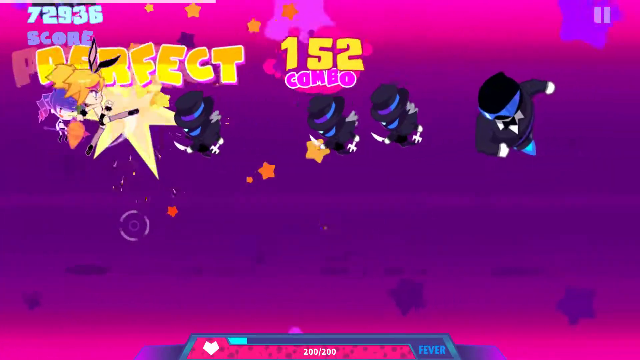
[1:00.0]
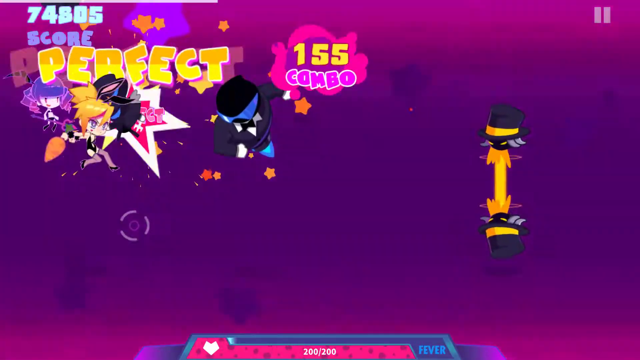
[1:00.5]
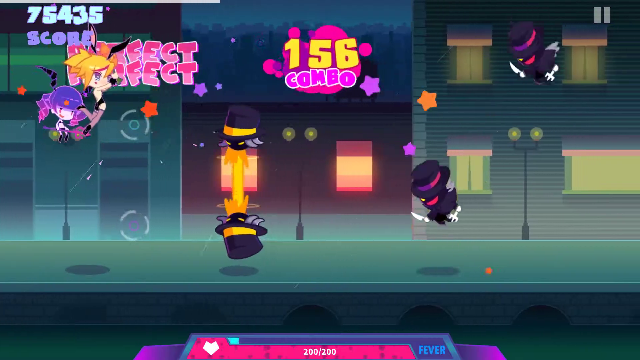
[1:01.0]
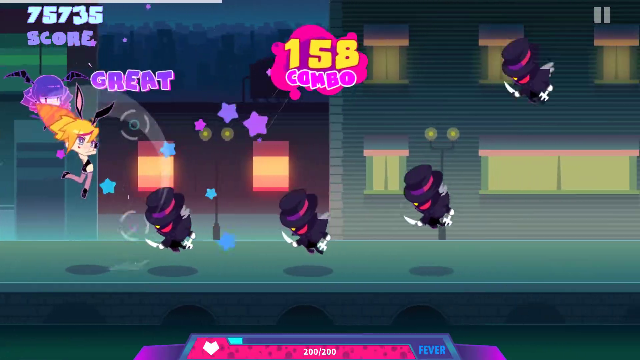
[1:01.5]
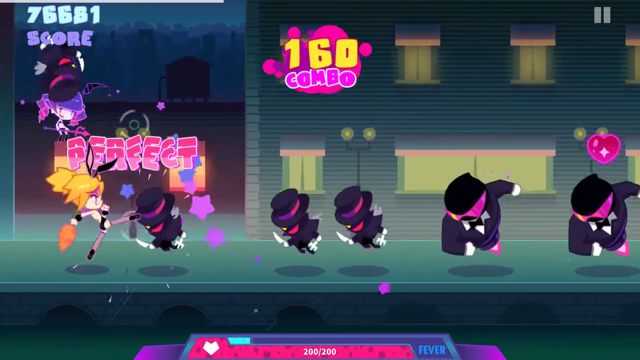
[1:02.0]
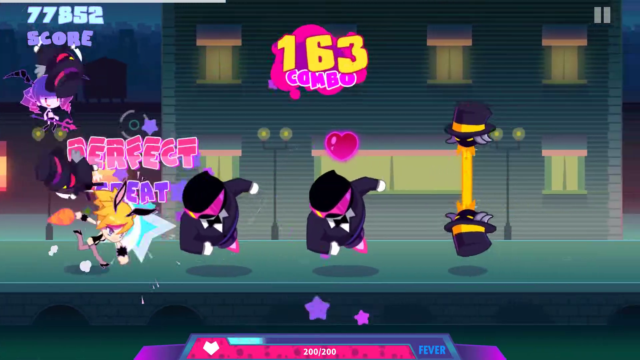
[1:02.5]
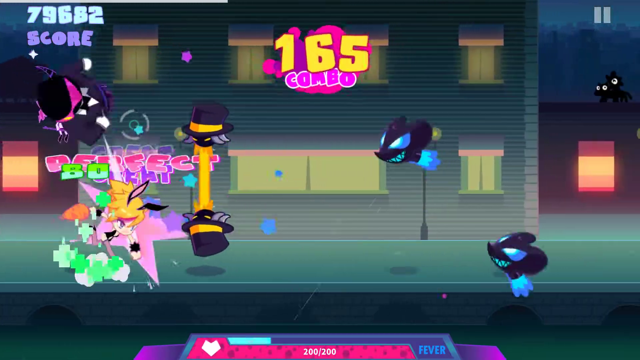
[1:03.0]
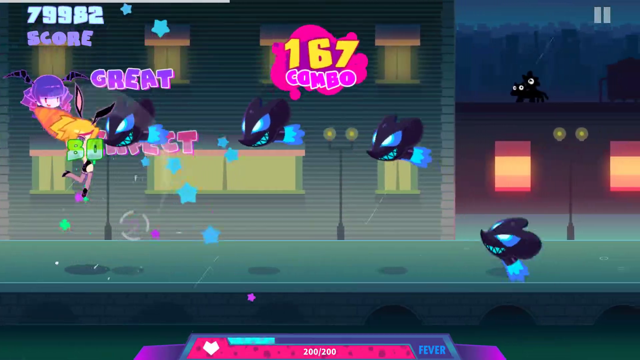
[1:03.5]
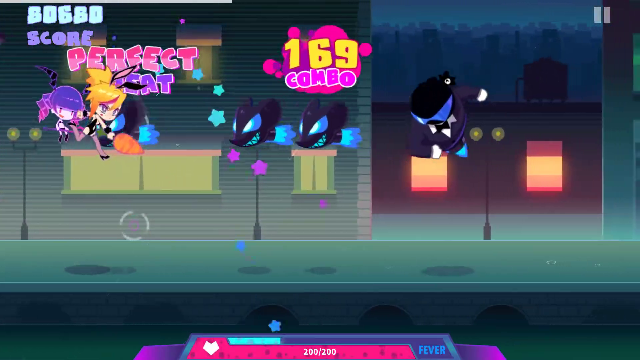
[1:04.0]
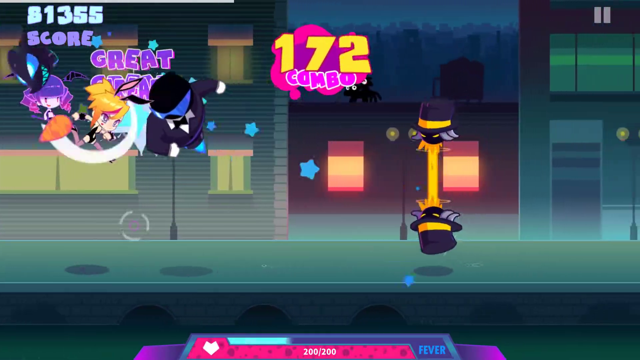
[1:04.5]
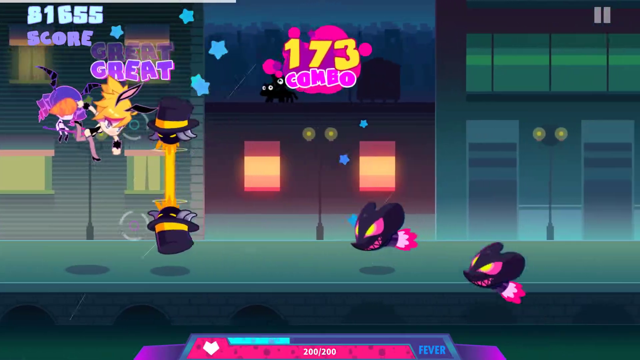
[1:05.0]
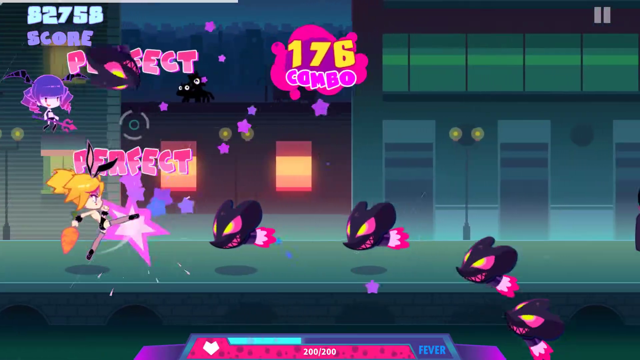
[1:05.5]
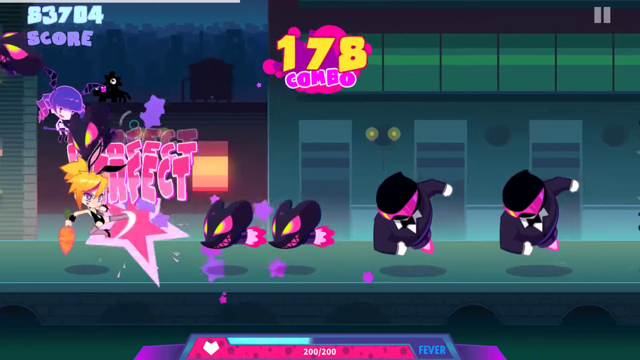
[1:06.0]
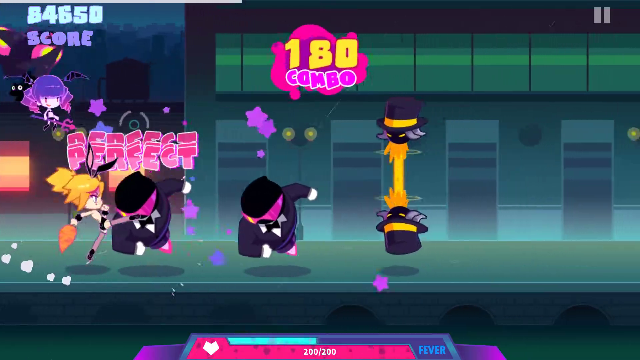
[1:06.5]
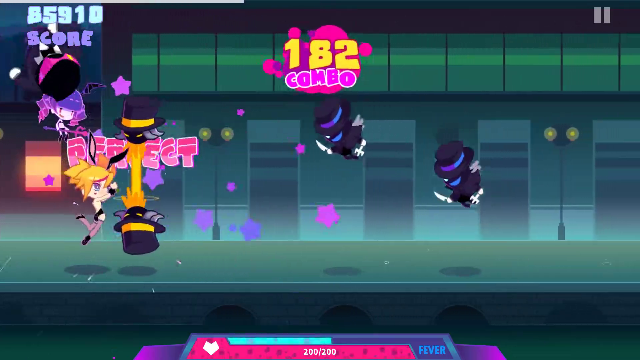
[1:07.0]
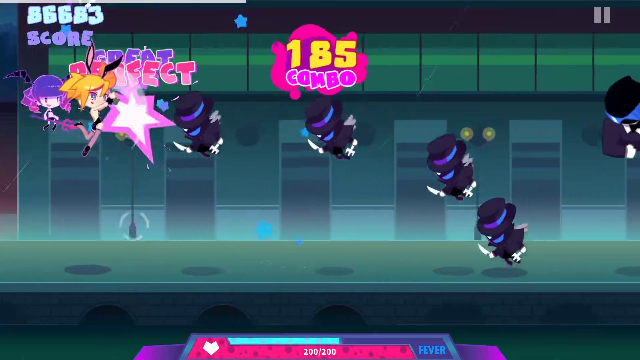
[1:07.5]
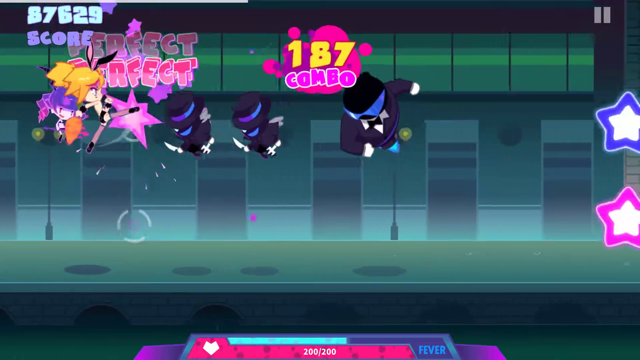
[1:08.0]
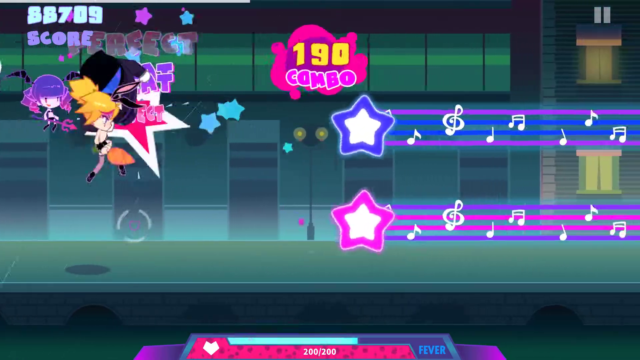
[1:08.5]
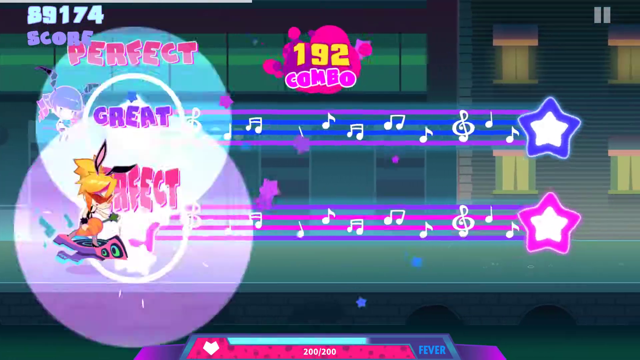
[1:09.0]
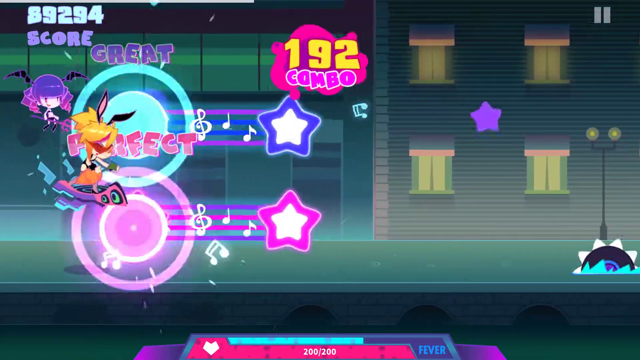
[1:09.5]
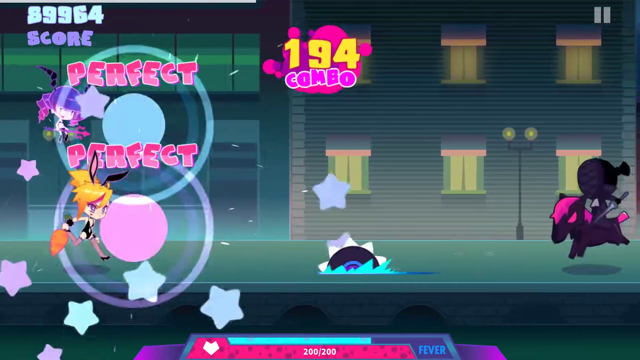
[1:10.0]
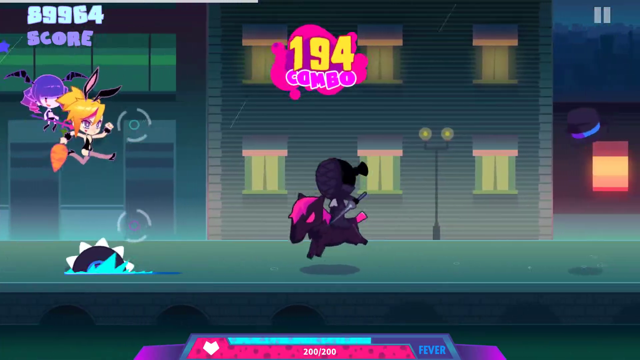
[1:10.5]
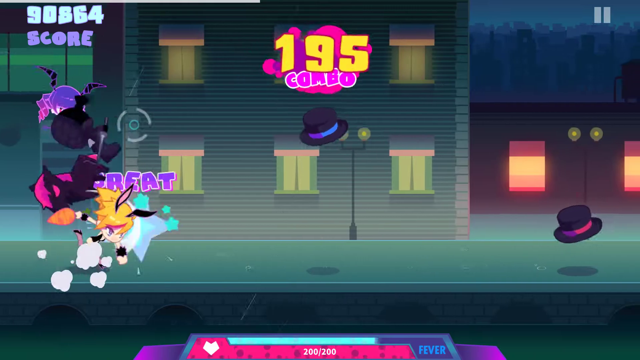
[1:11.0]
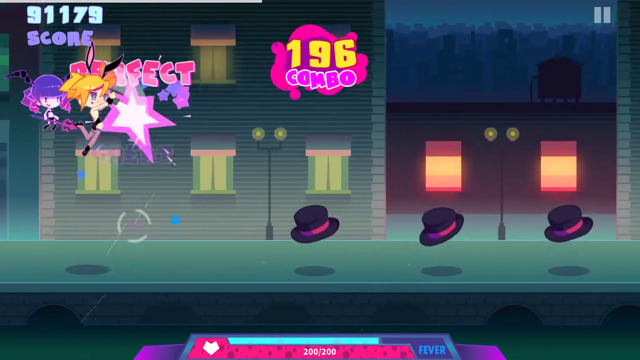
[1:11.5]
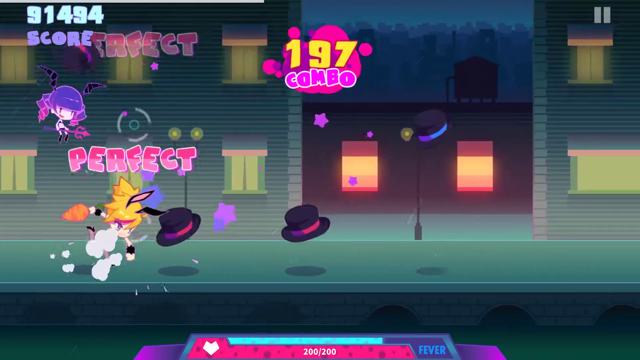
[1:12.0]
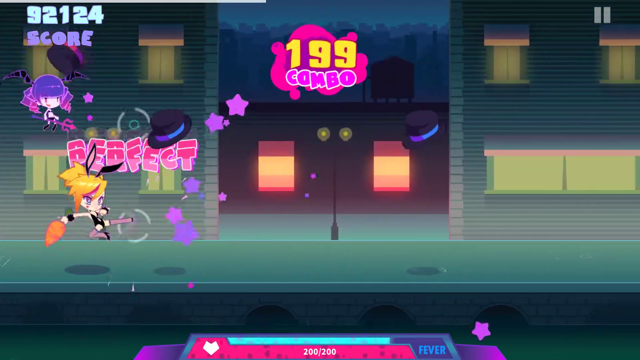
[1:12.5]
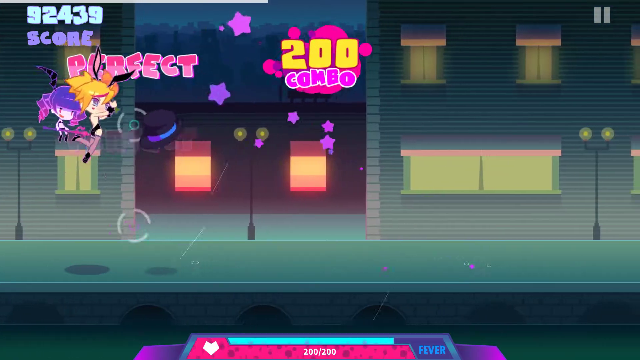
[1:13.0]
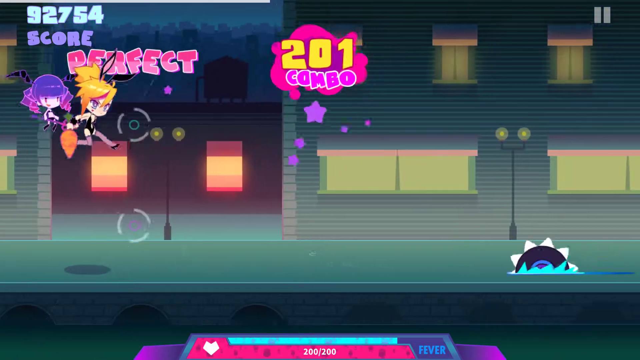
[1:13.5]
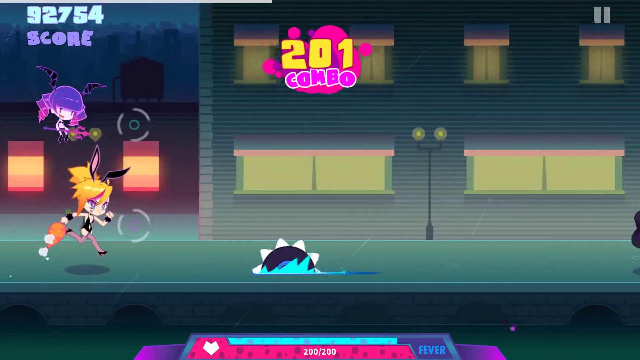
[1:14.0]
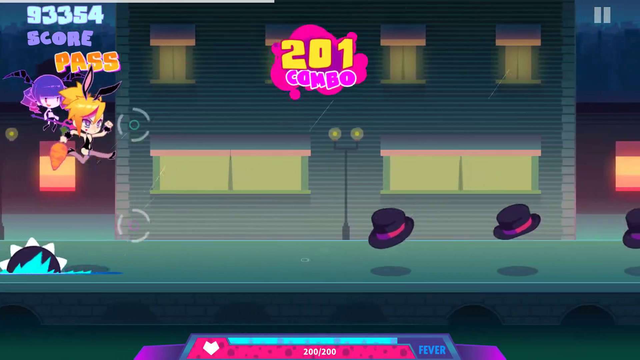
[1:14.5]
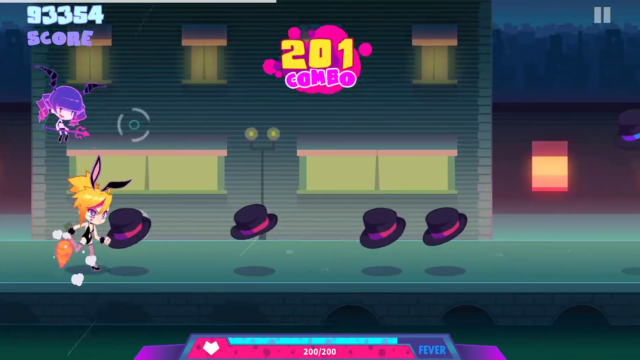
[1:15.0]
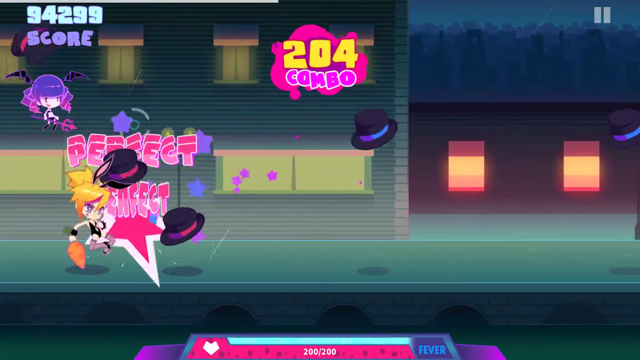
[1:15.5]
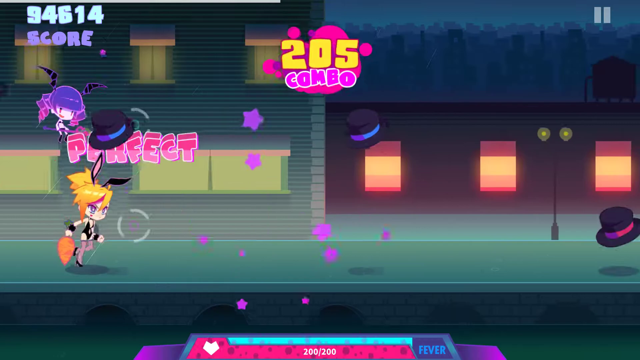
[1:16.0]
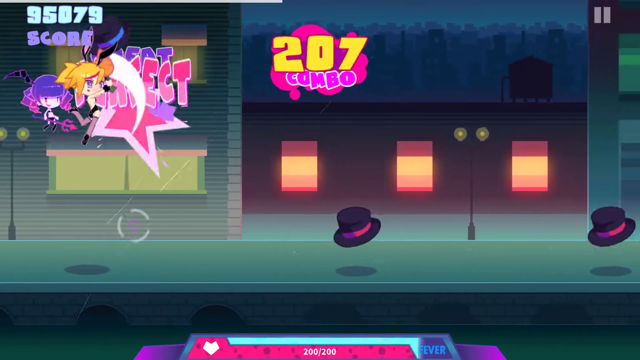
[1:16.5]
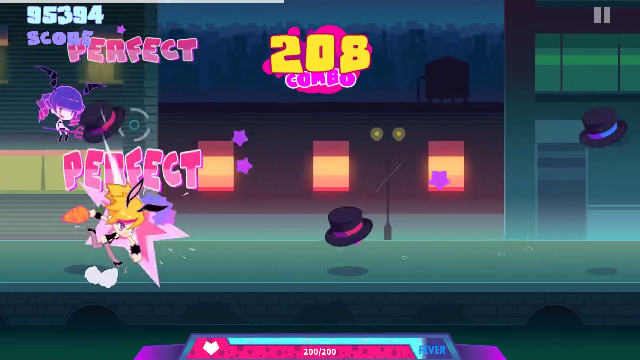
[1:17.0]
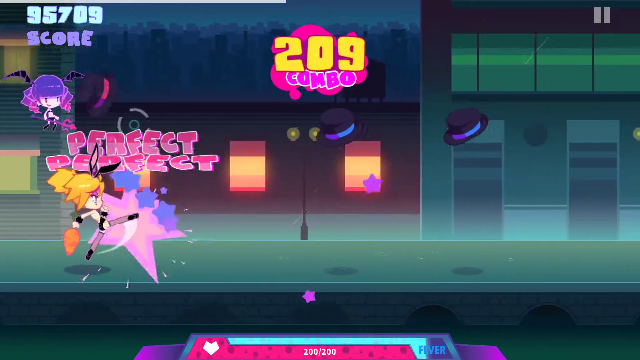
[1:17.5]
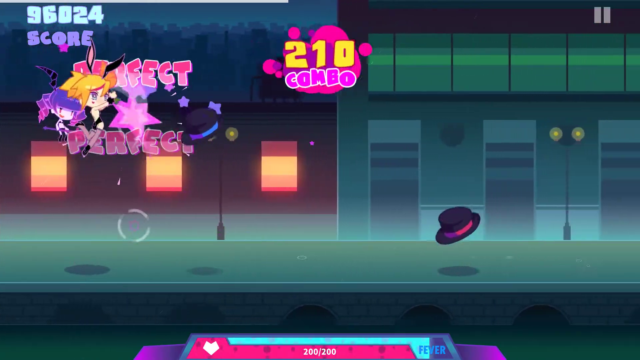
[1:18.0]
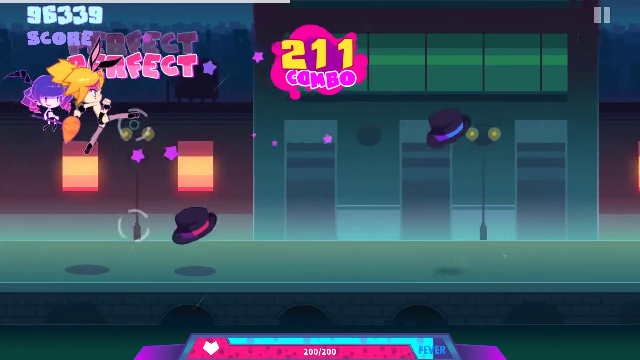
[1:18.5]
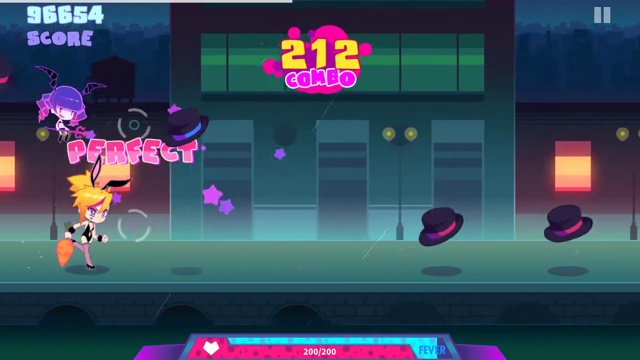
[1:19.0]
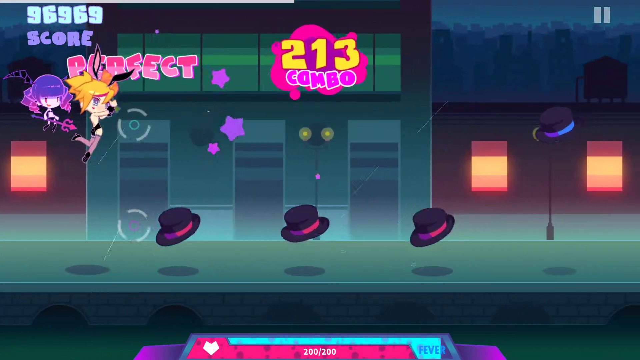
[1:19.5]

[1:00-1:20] A little girl anime character runs on the sidewalk beside a street. She wears black bunny ears and a tight black leather upper-body piece that leaves her stomach and back exposed, along with stockings and high heels. Floating above her is a little purple anime character with a purple hat. Buildings with doors and windows above them line the sidewalk. As she runs, things fly at her and she catches them. Sometimes they are hats, and each time she catches one the word "perfect" appears. The hats then turn into pictures of little blue creatures, and then into blue men in black suits, bent forward, coming toward her. She jumps into the way to catch the things flying at her, and every time she catches one the word "perfect" appears in pink above her.